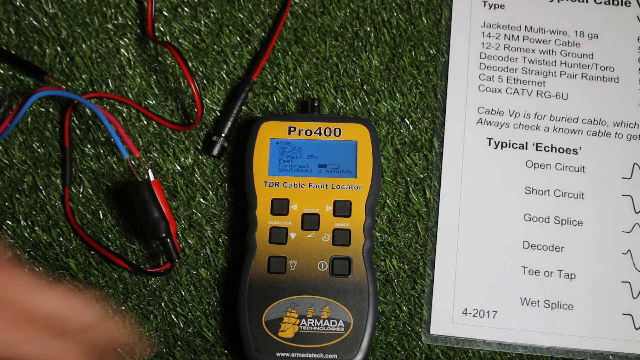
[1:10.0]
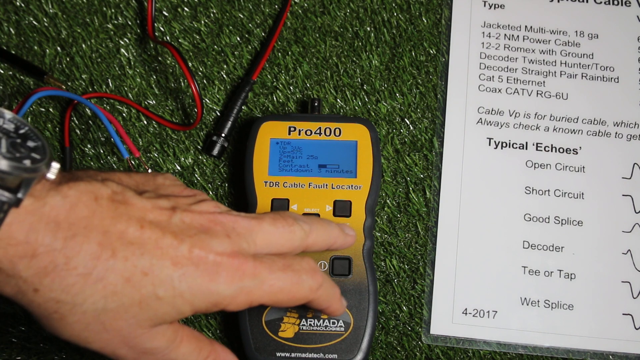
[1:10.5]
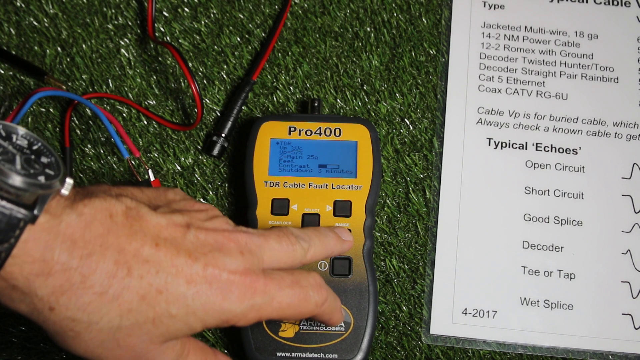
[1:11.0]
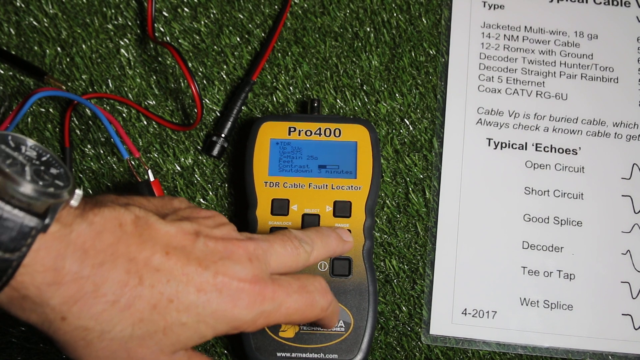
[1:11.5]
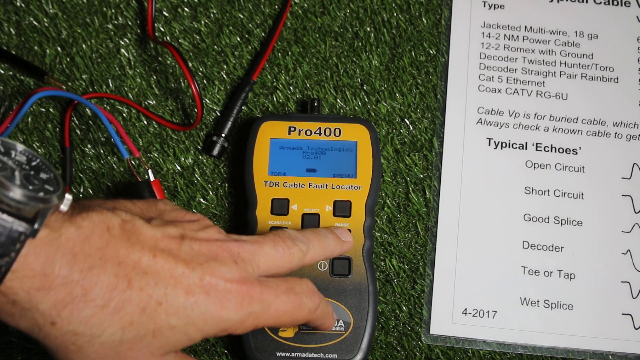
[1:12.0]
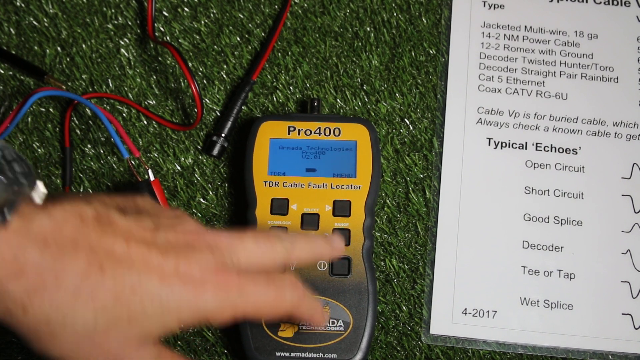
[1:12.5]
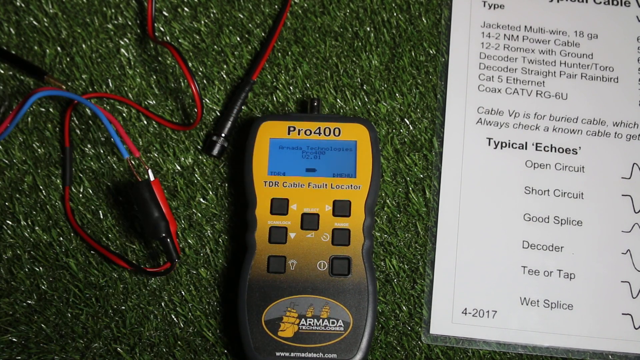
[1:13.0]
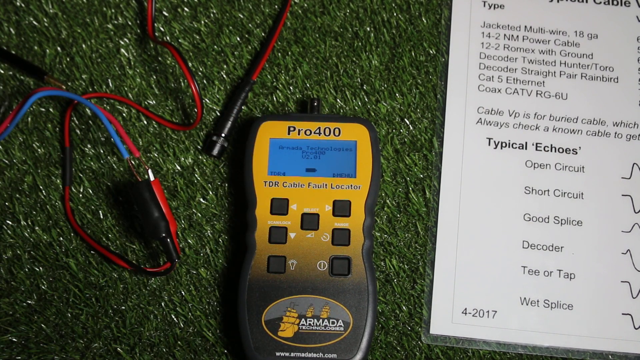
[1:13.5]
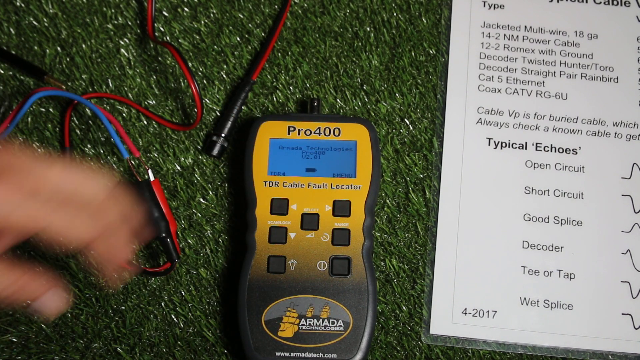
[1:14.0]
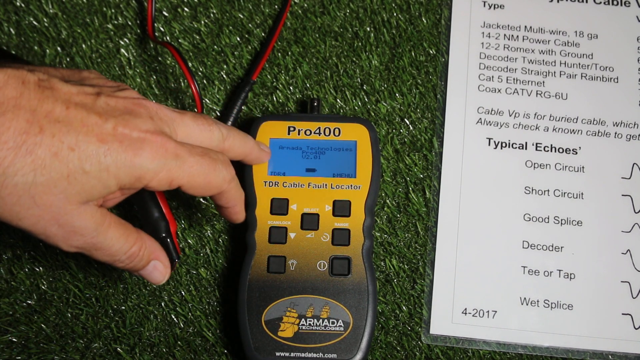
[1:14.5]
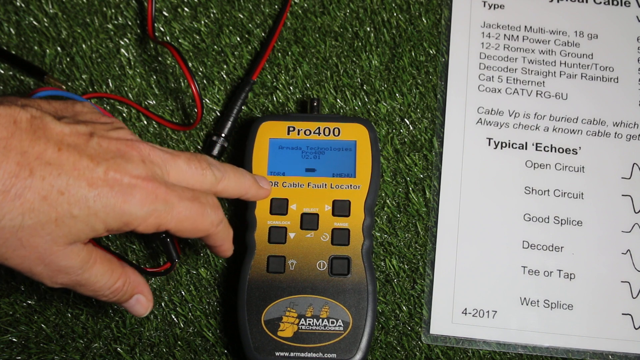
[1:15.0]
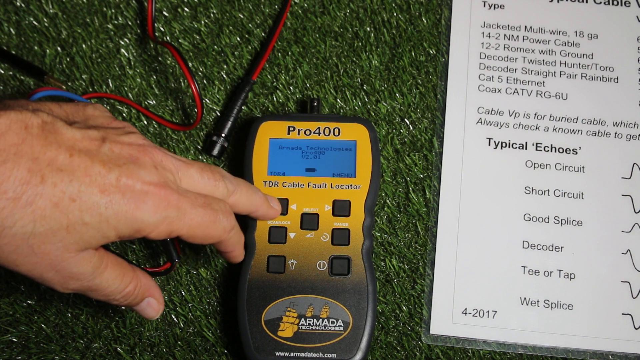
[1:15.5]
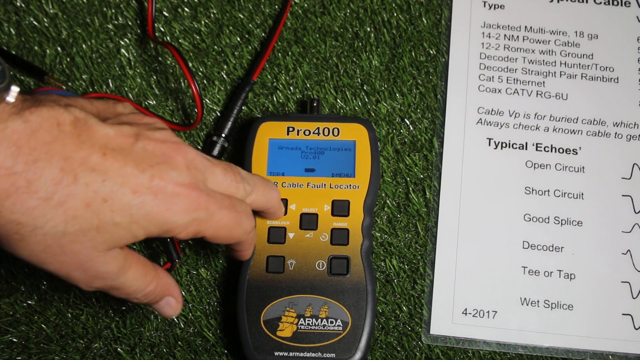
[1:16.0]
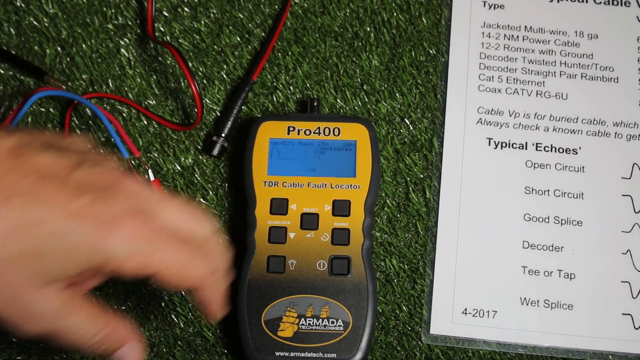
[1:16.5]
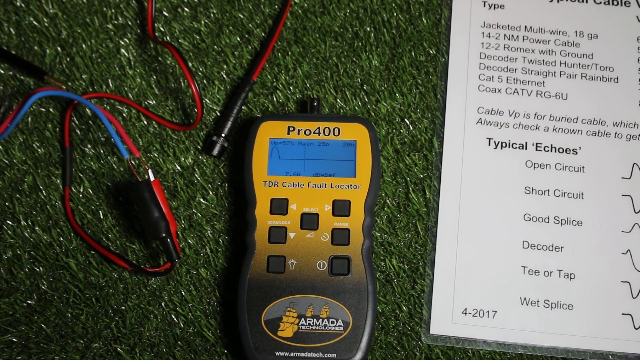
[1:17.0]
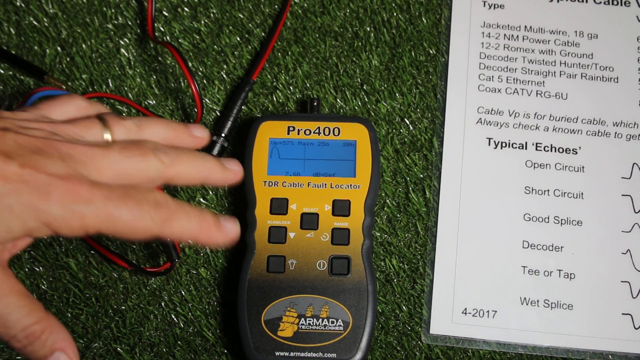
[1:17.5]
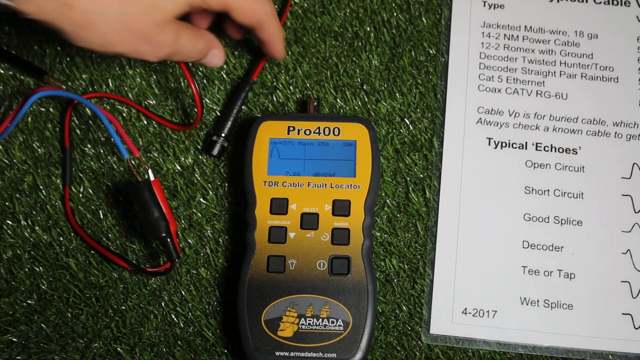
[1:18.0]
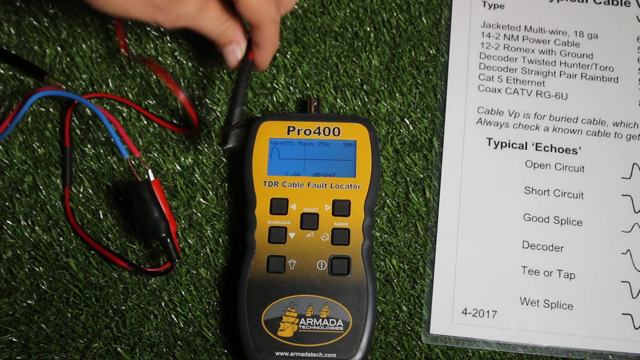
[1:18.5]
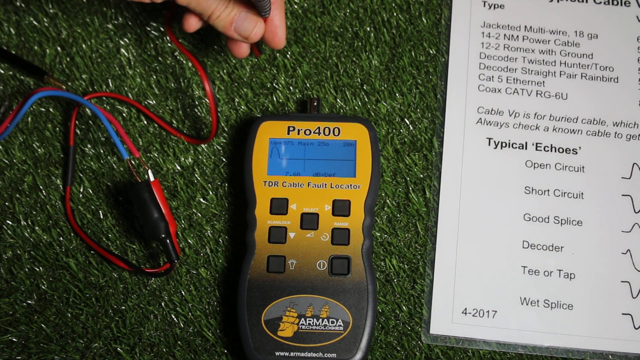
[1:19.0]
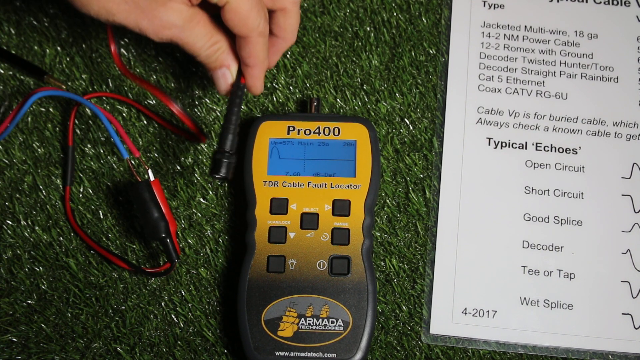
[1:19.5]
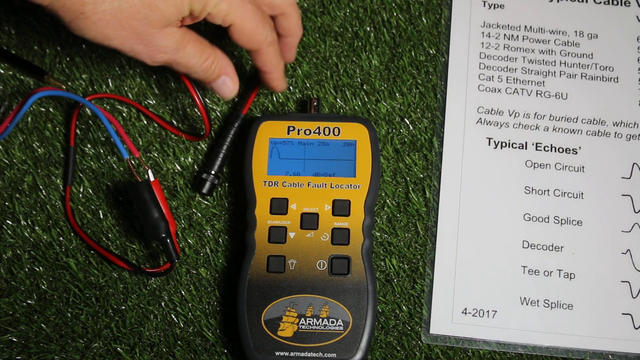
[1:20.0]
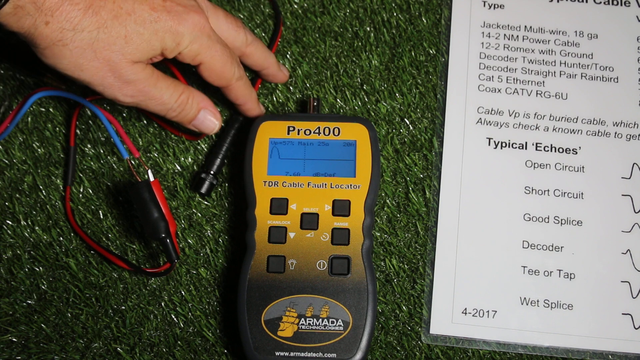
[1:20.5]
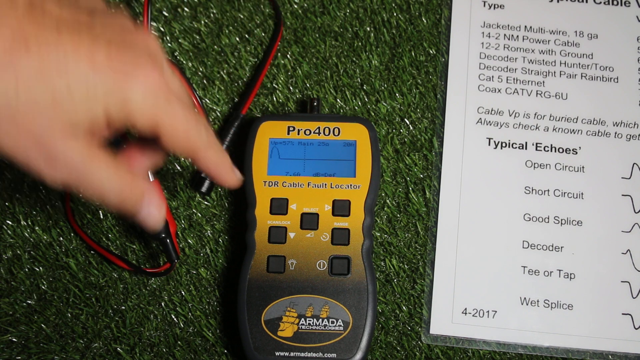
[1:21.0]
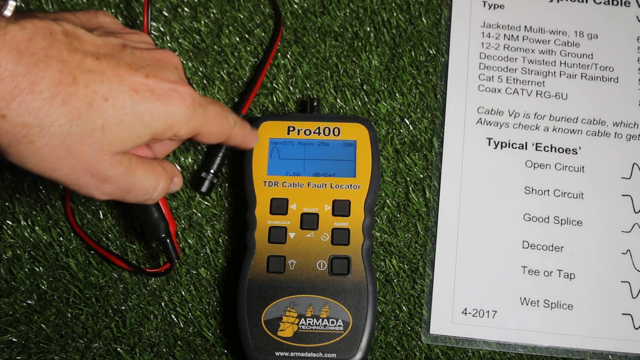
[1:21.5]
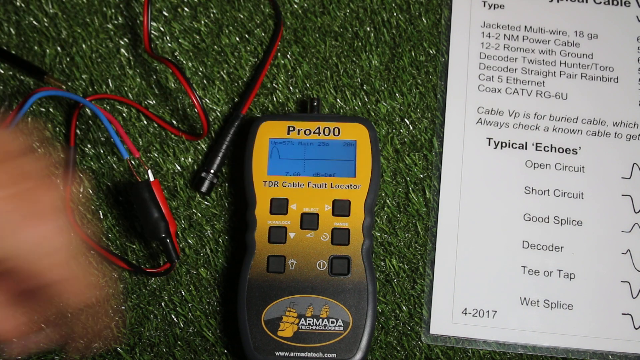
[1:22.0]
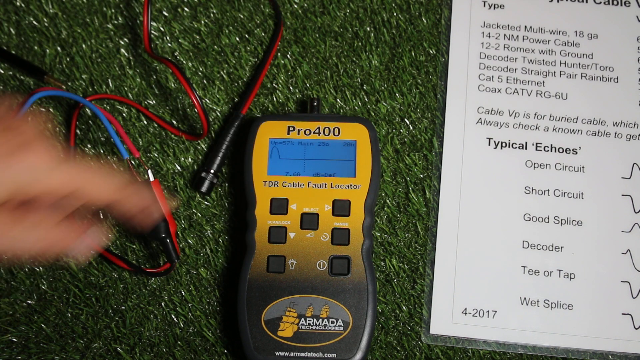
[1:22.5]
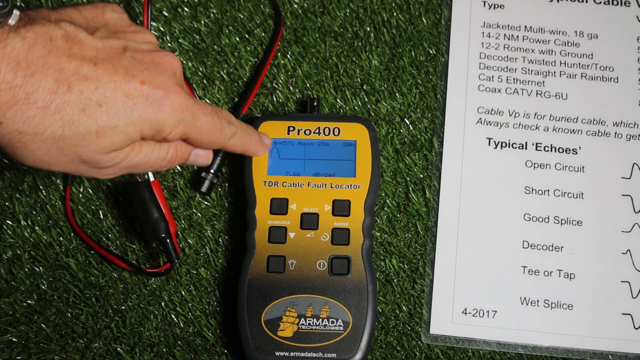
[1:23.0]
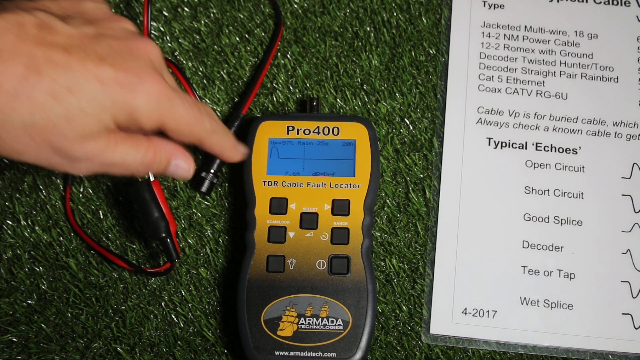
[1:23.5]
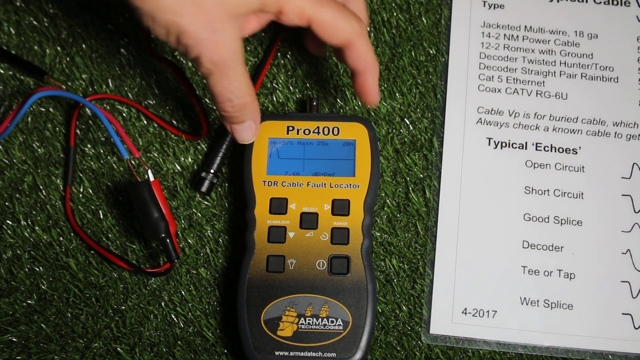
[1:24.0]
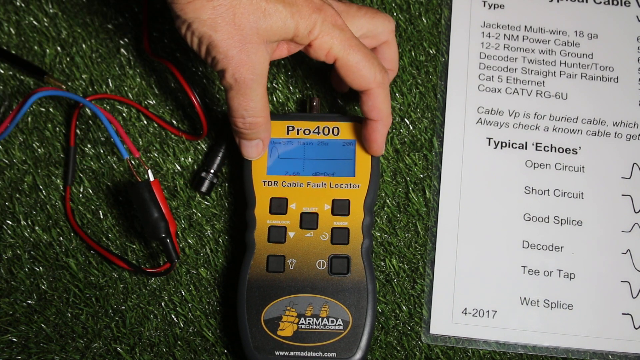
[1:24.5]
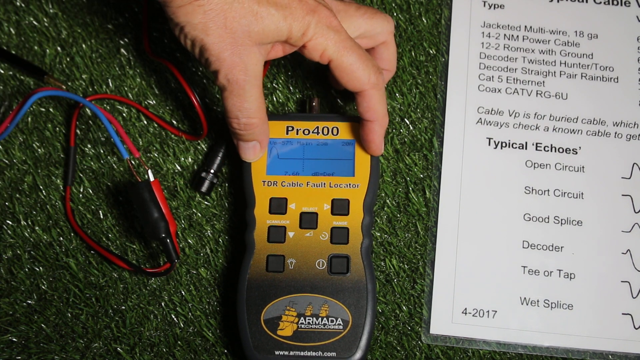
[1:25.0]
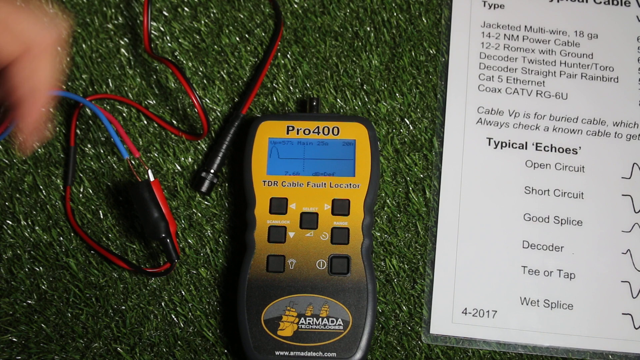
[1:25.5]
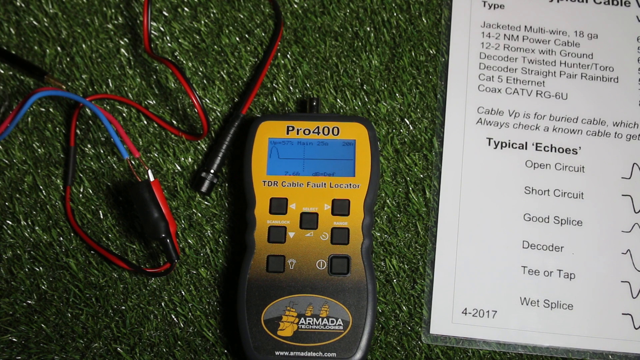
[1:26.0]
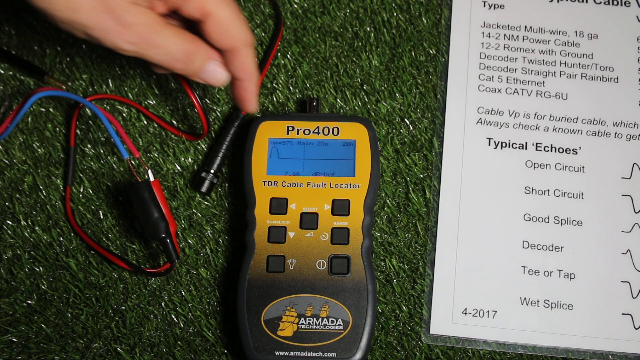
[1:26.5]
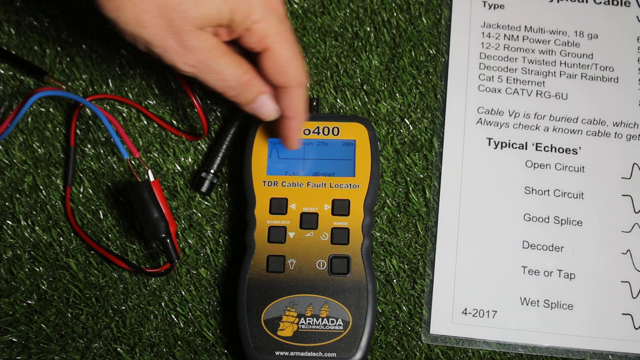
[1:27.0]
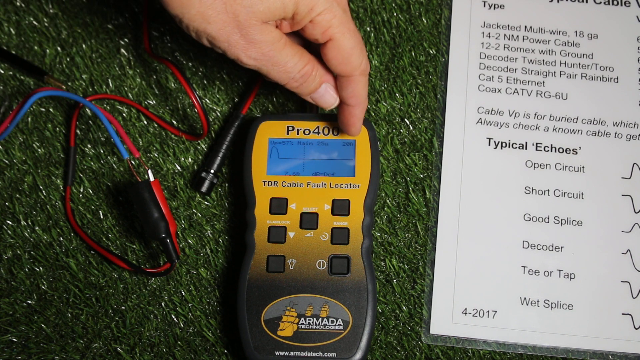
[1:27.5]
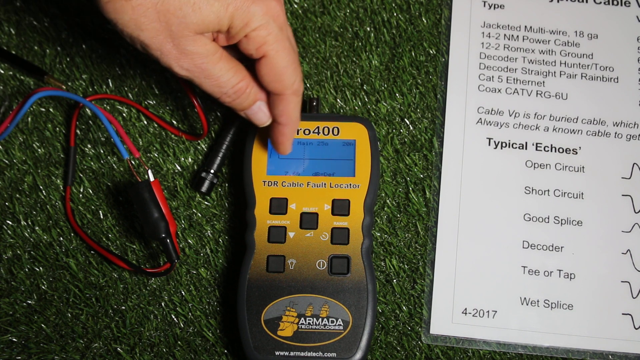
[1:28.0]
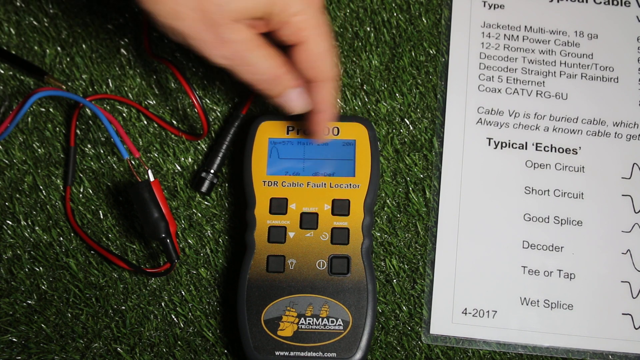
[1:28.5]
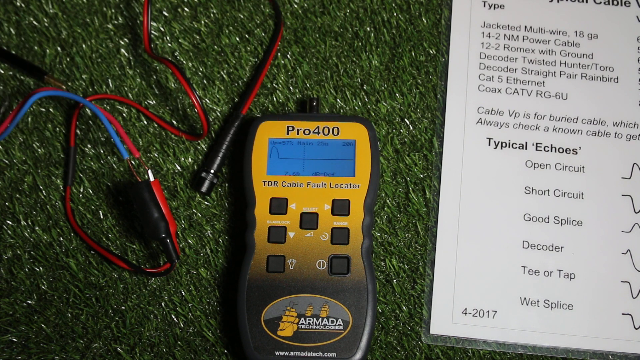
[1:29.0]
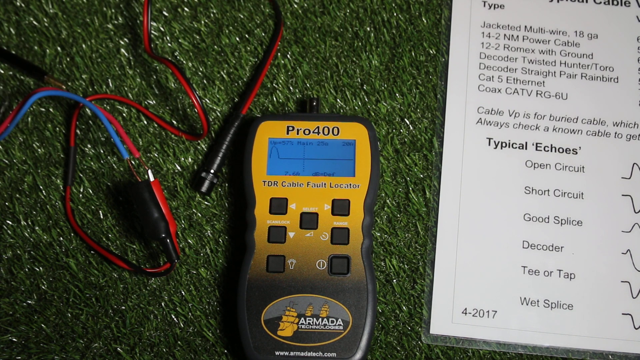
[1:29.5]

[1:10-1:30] A man's left hand reaches in and turns on a Pro 400 device, touching a few buttons. He picks up the wire to the left of the device; it is red with a blue wire. He touches the device quite a bit, running his finger over the top portion of the screen and up and down the left side by the screen. He then puts his thumb and index finger over the top of the device, reaches in and points again, and runs his finger over the top portion next to the screen. Next to the device is a piece of paper typed with "typical echoes", with diagrams next to each description, for example "open circuit", "short circuit", "good splice", "decoder" and "T or tap".